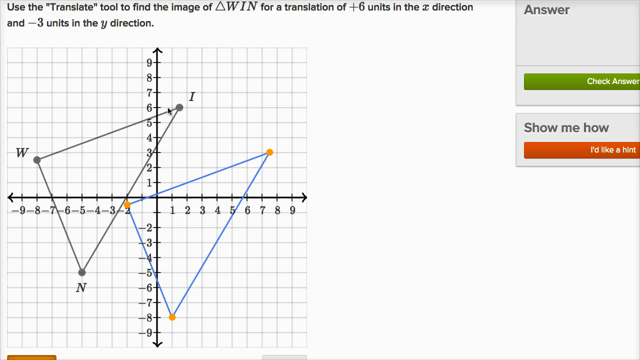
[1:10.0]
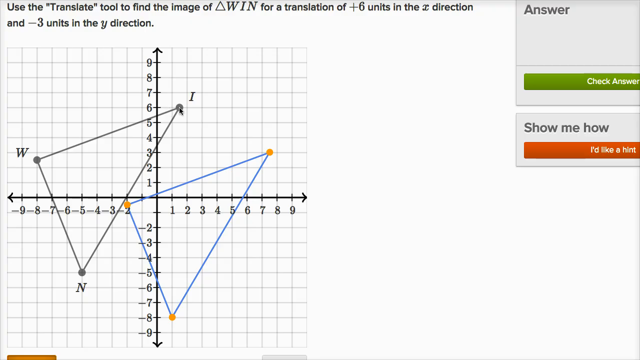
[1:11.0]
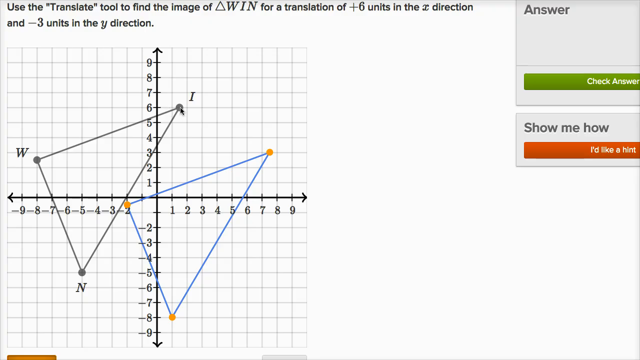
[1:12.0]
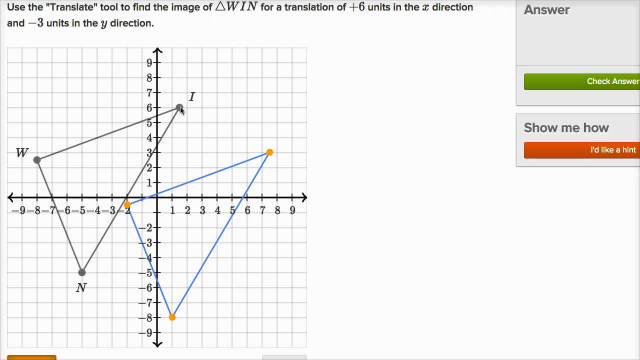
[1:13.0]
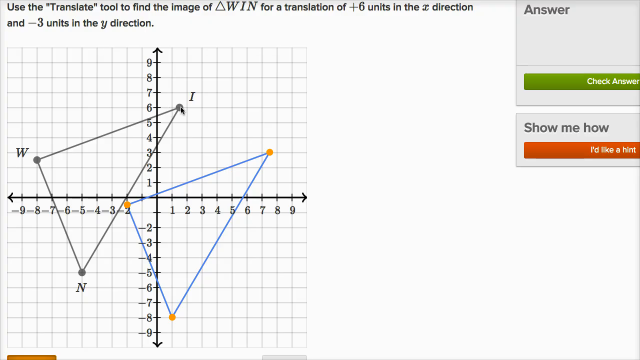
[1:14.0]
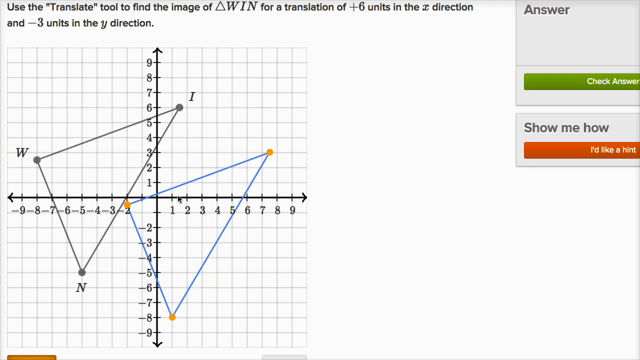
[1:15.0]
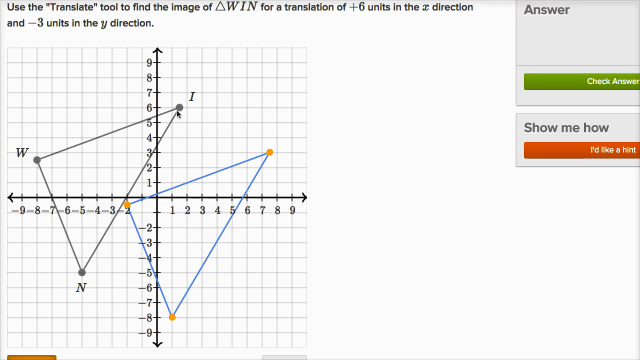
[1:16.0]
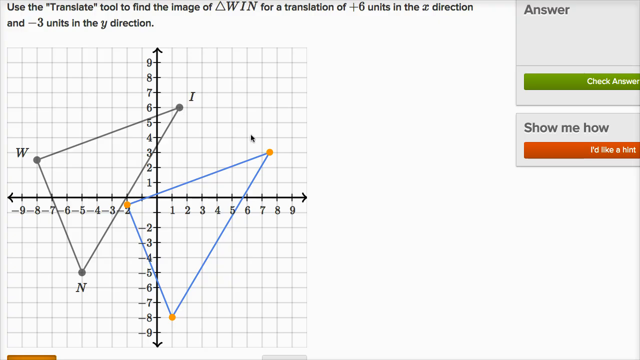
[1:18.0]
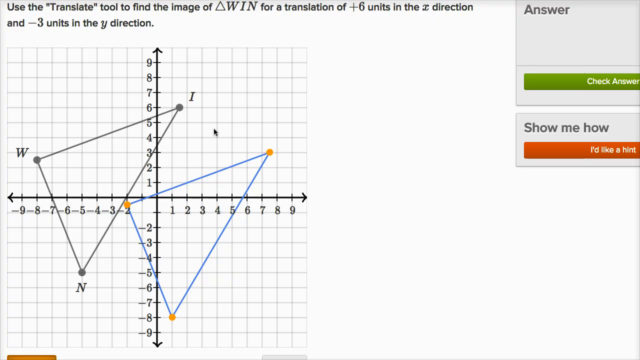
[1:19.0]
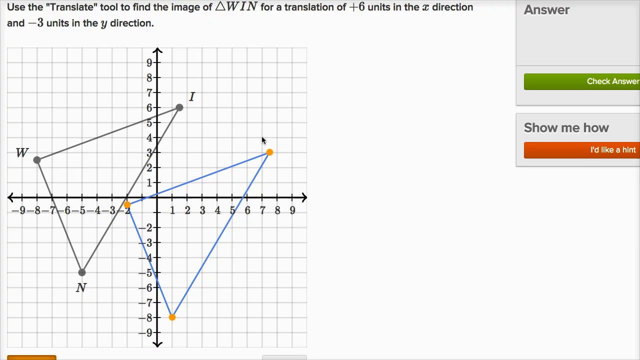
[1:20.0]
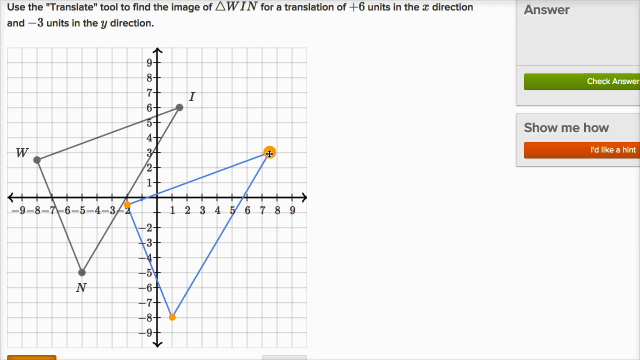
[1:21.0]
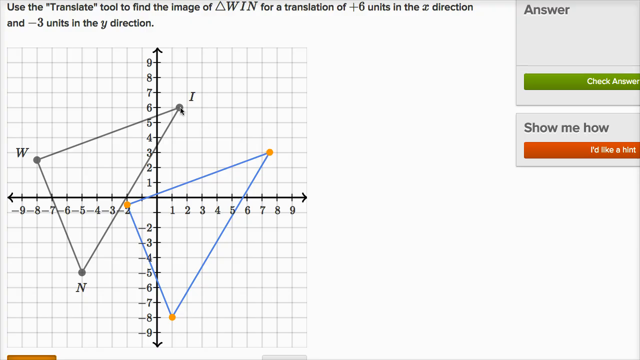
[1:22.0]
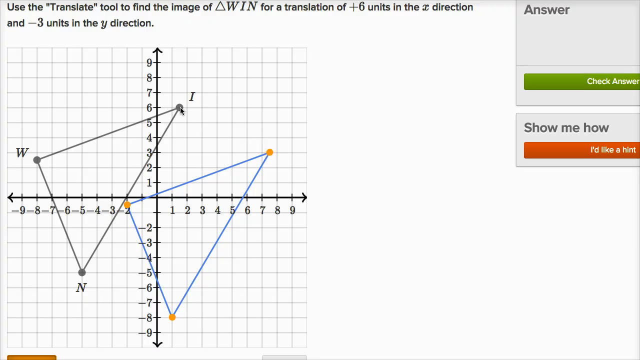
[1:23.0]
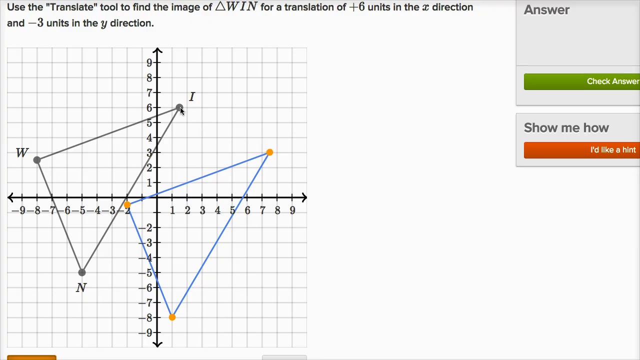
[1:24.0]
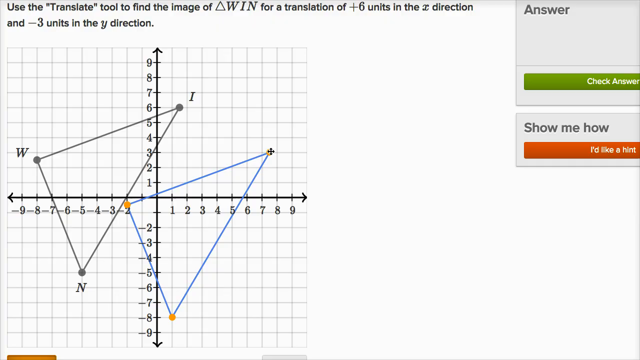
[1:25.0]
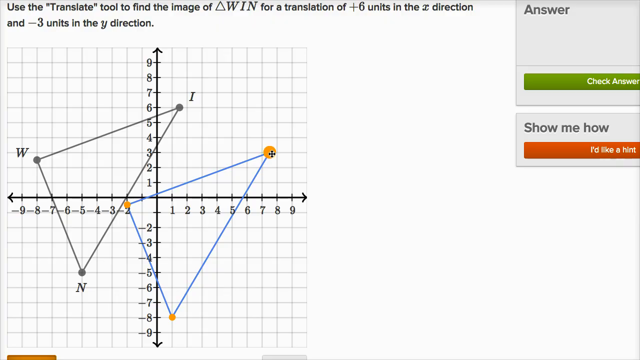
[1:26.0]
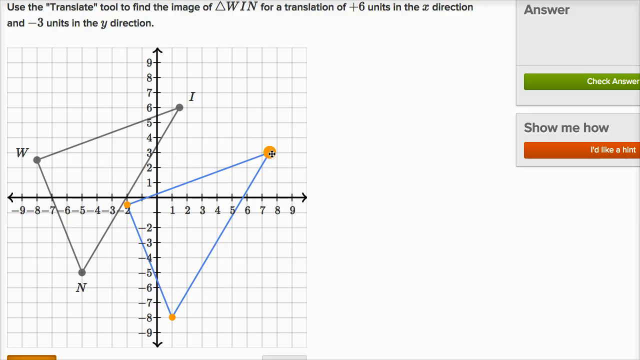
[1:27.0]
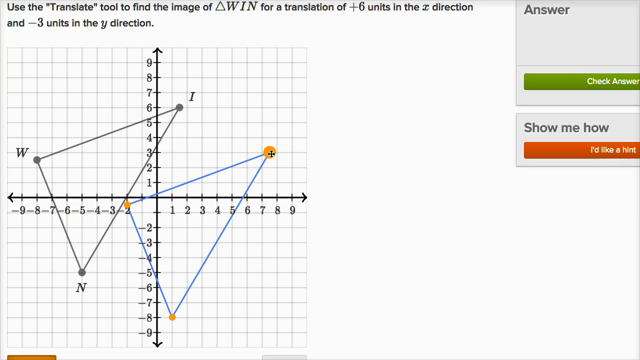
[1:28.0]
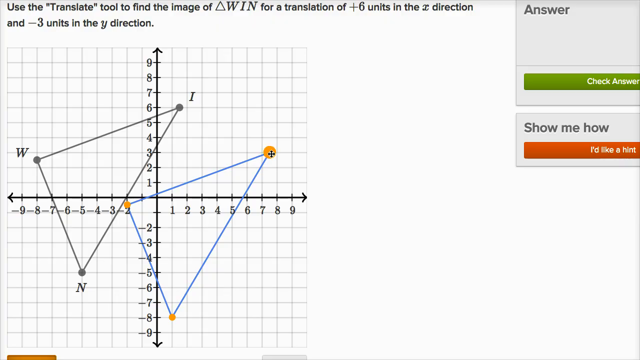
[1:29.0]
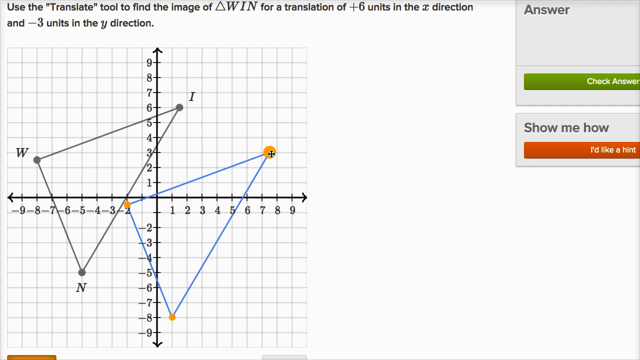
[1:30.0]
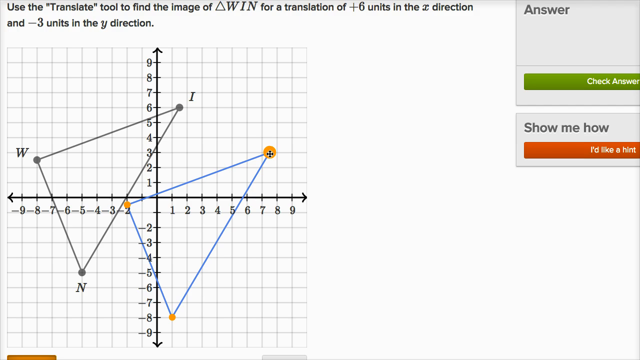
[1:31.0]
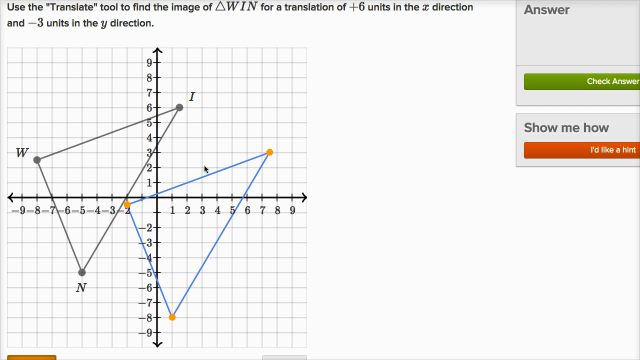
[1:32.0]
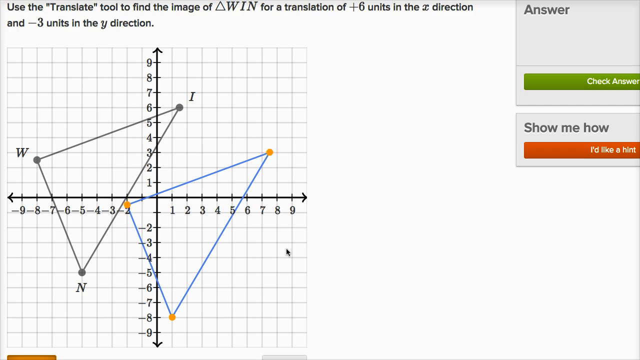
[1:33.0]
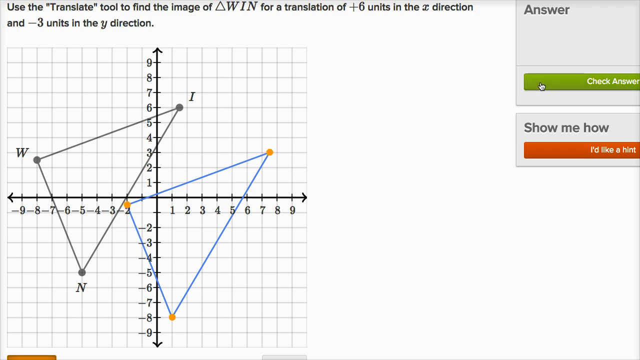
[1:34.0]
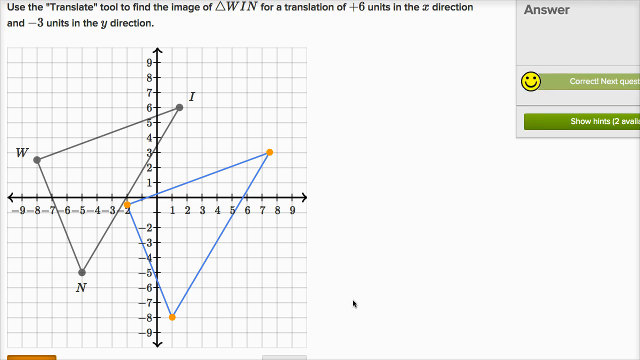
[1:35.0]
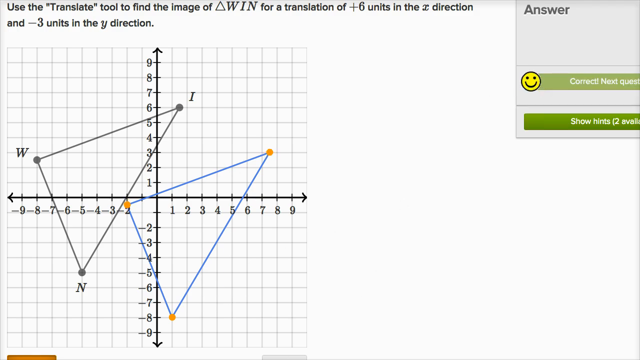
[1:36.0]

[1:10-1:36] After hovering over the plus six and the negative three, the mouse points to the grayed-out I and then to the new I on the blue triangle with yellow dots. None of the points on the new triangle are labeled, while all three points on the gray triangle in the original position are still labeled. The mouse goes back and forth between the I and where the new I would be. When the mouse hovers over a yellow dot, the cursor turns into a small black cross or plus symbol. Then the answer box is clicked: the dark green "check answer" box fades out and a smiley face appears, a yellow circle with a black outline, two black eyes and a black smile. Below it is text that apparently reads show hints with two available in parentheses, though that part of the screen is cut off.